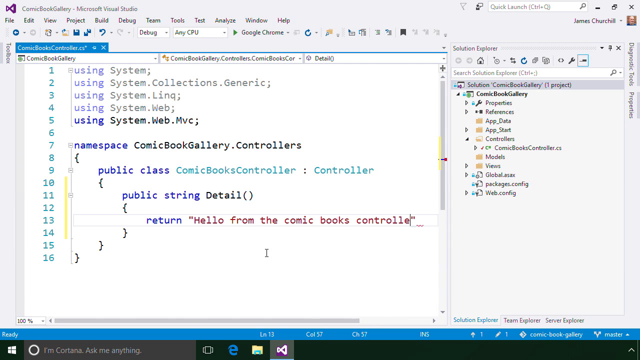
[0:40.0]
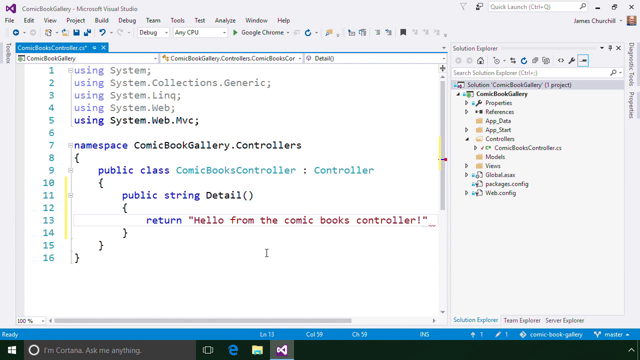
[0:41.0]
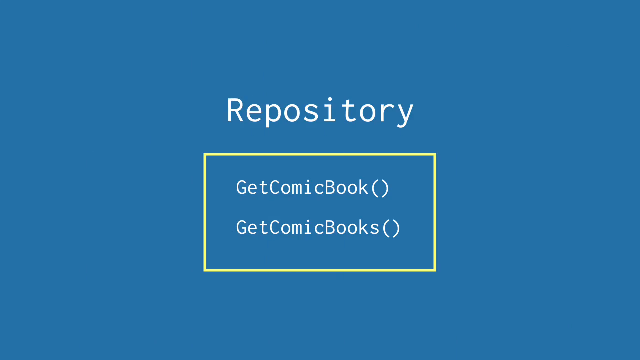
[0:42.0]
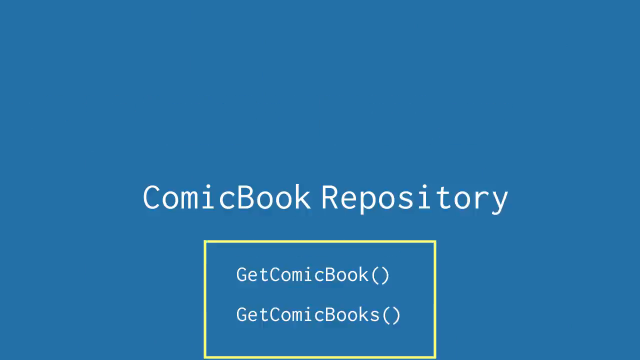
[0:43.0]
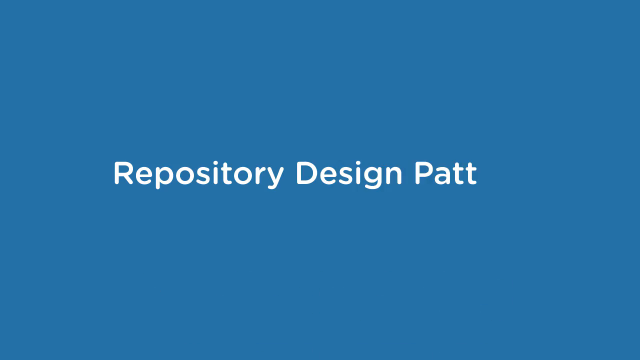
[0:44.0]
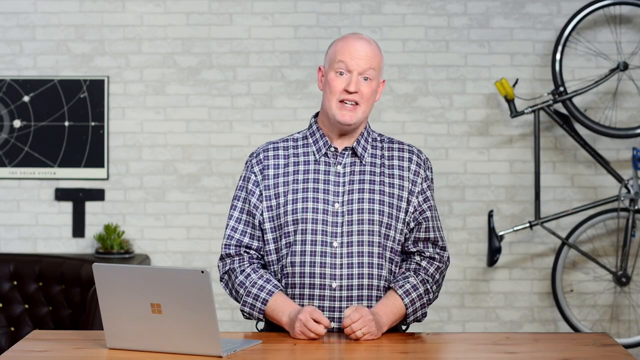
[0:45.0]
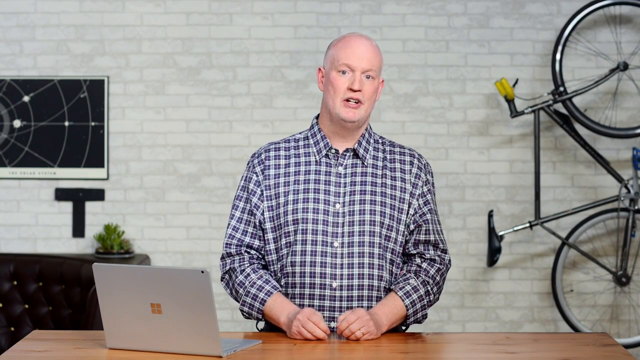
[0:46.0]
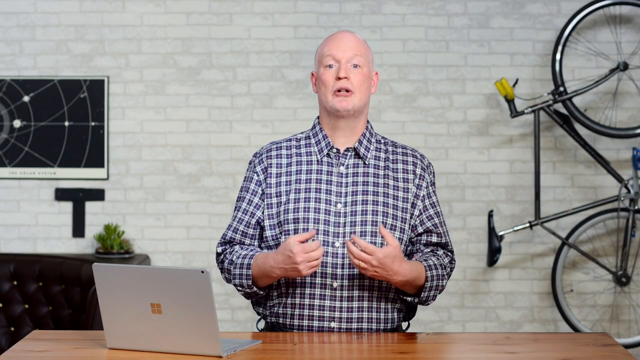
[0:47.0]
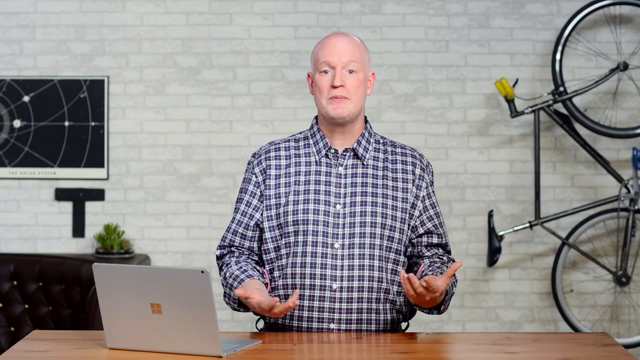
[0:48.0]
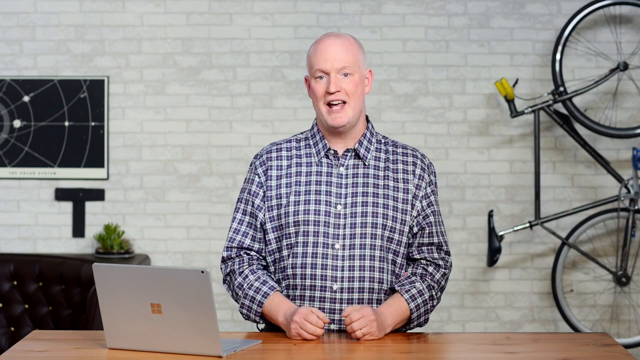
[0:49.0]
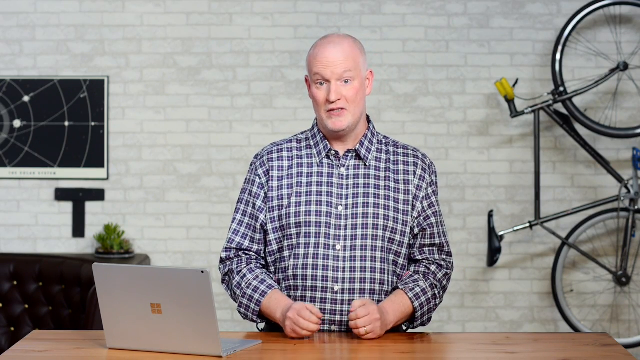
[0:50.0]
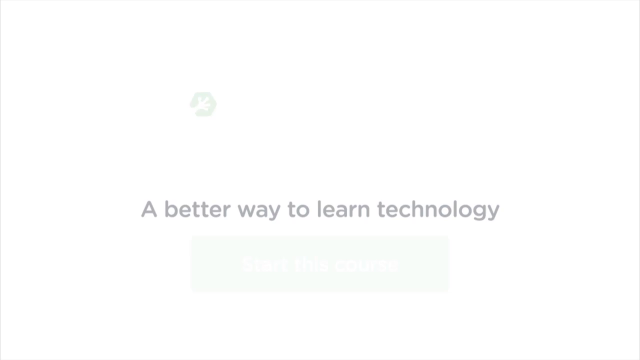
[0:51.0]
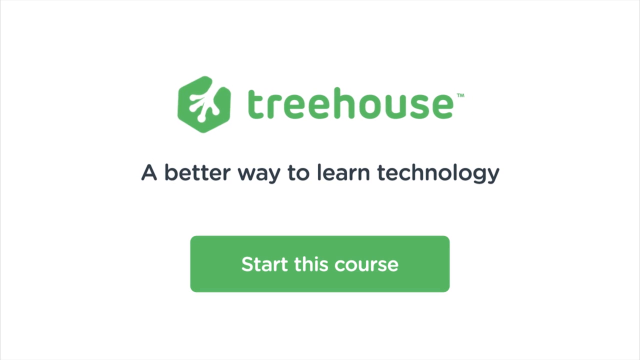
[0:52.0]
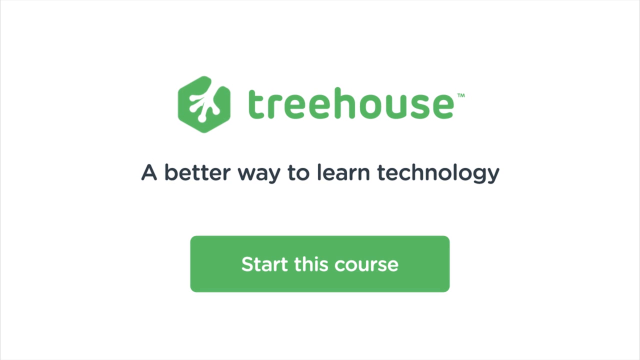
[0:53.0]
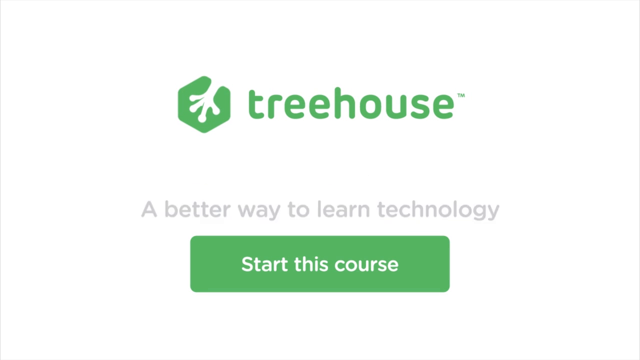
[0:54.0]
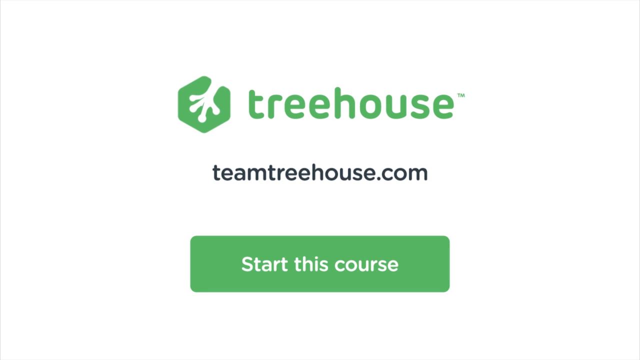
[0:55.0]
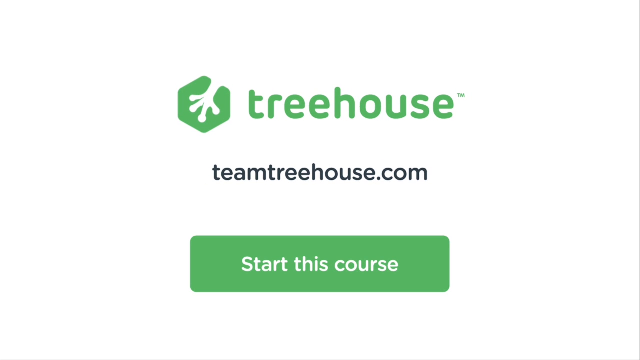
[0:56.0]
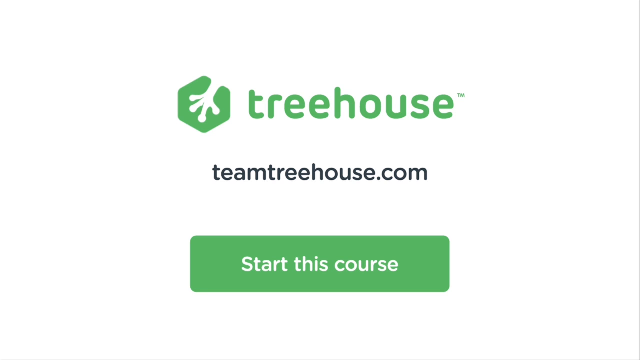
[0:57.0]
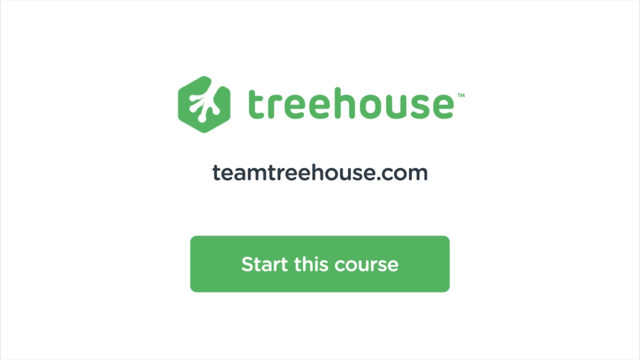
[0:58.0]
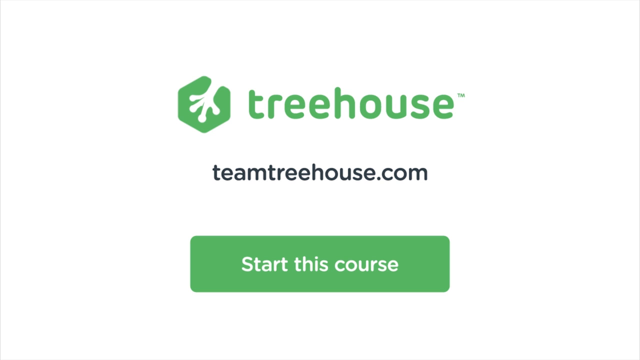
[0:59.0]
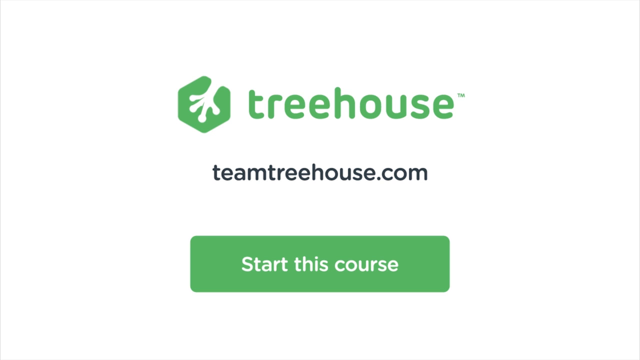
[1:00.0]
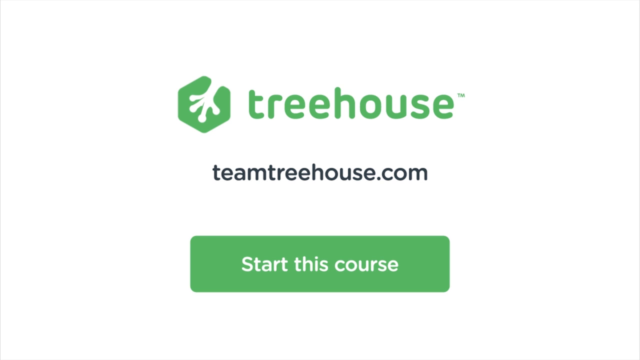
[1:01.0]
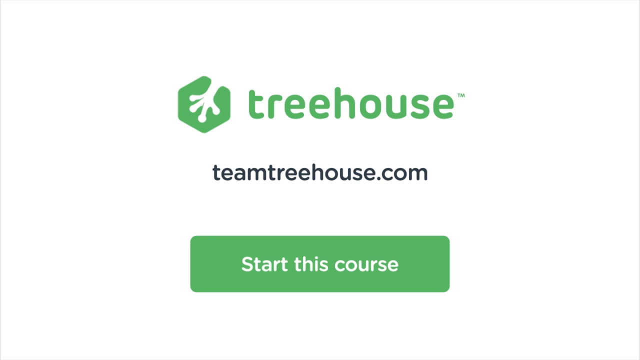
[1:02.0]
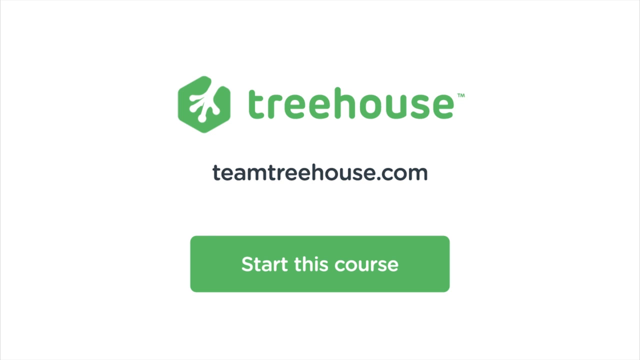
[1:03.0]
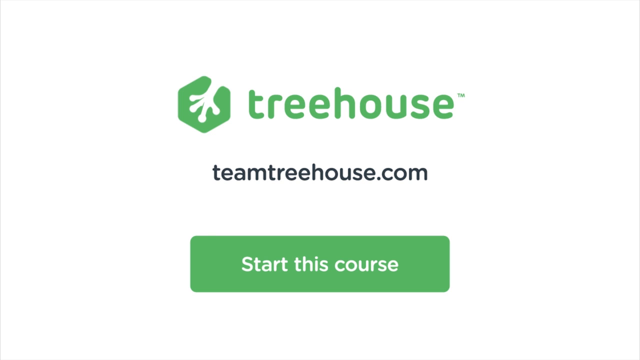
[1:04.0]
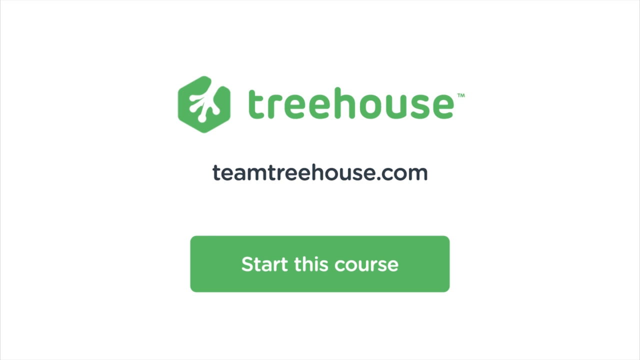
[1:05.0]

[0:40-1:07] "Repository design pattern" is written on the screen, and James Cheshire explains what the words mean. Afterward, the screen shows "Treehouse", "a better way to learn technology", and an option reading "start the course". The Treehouse "start the course" screen continues to be shown.